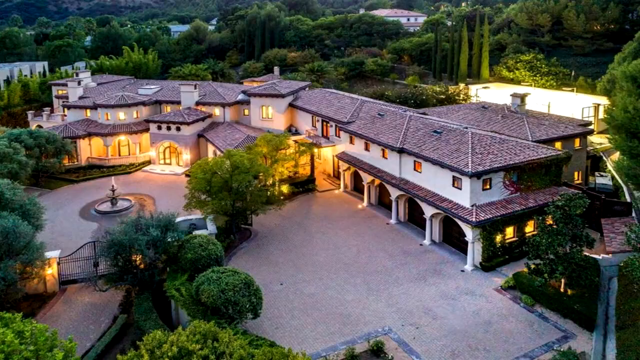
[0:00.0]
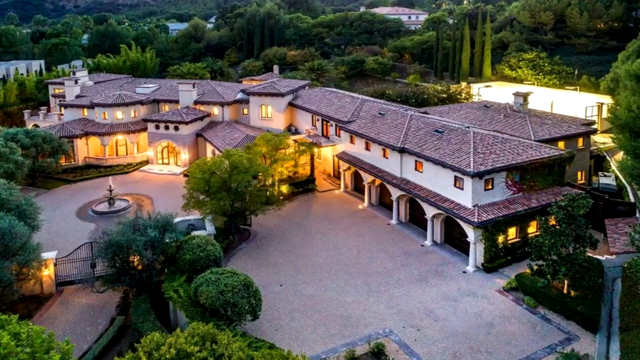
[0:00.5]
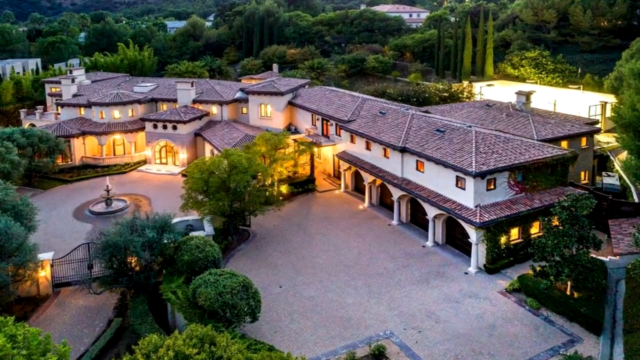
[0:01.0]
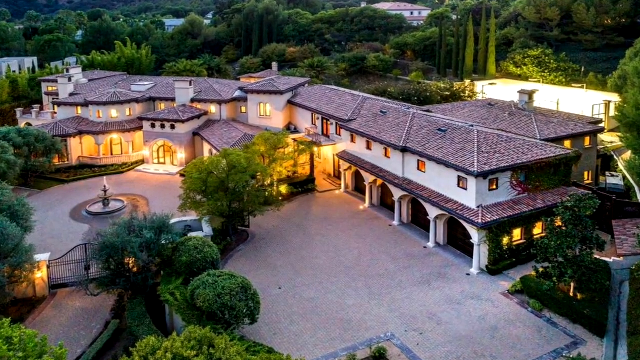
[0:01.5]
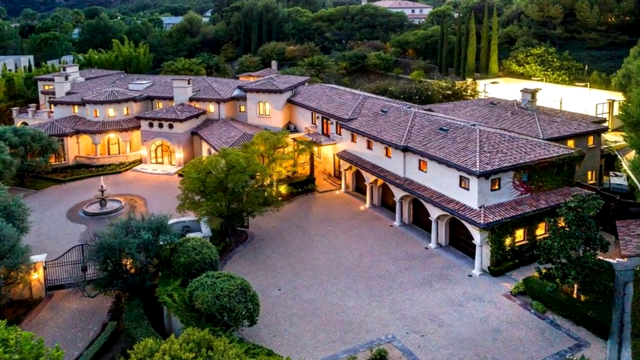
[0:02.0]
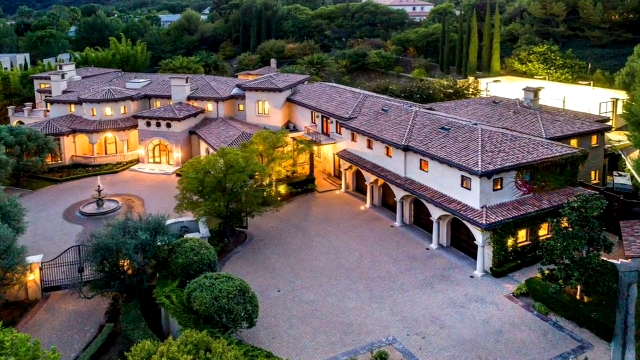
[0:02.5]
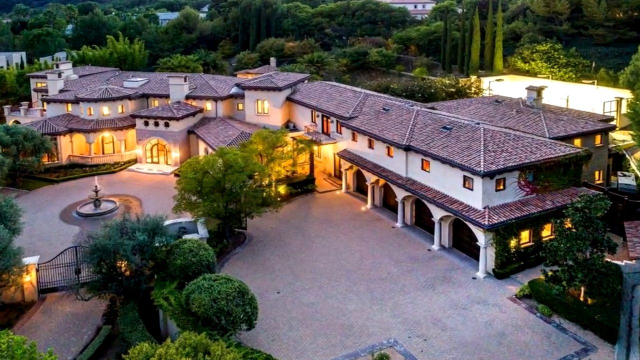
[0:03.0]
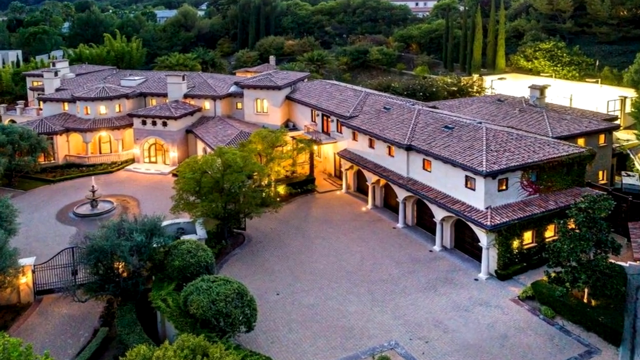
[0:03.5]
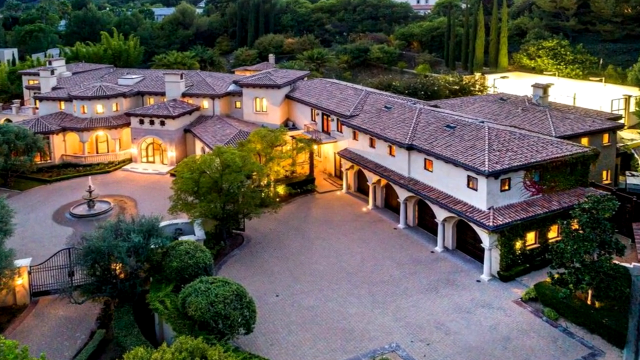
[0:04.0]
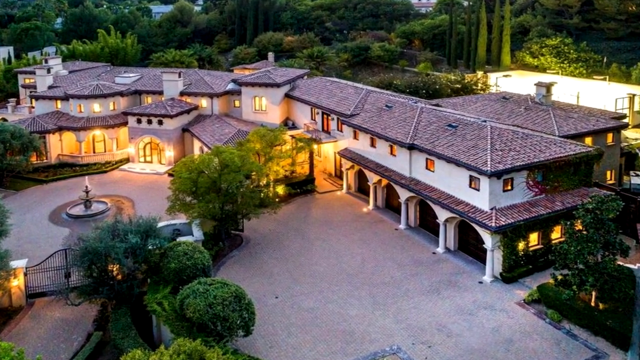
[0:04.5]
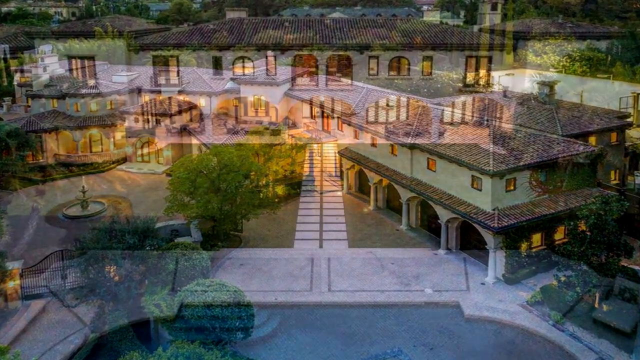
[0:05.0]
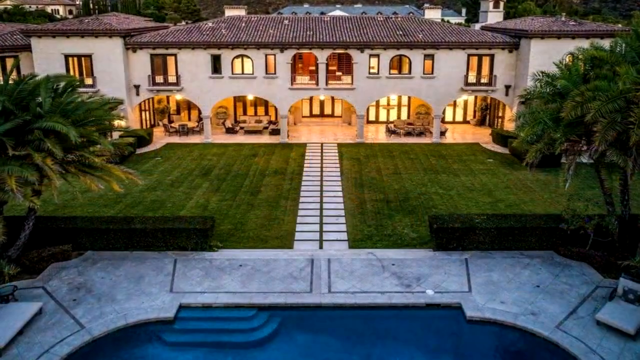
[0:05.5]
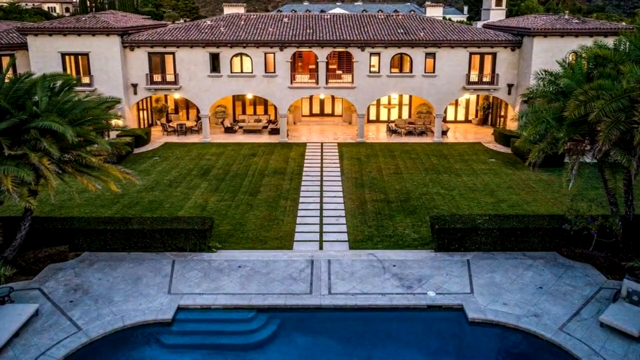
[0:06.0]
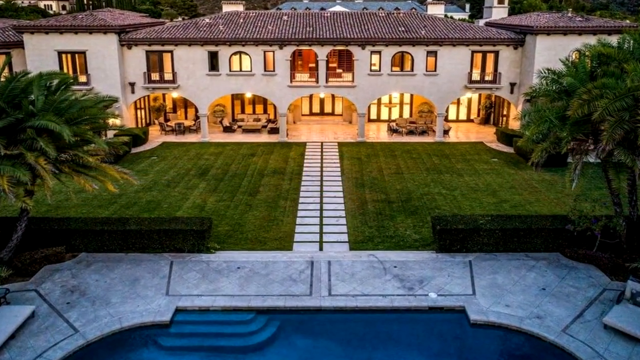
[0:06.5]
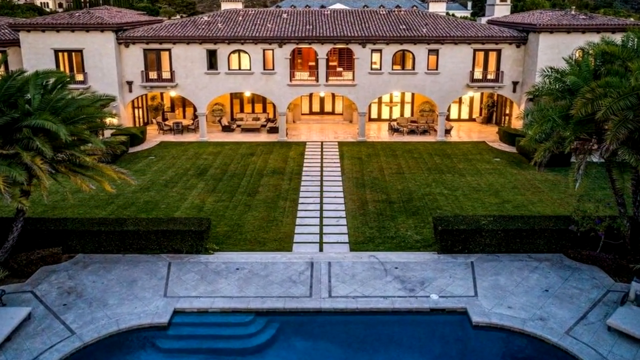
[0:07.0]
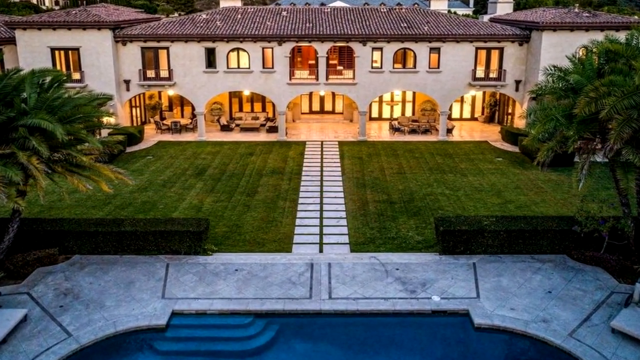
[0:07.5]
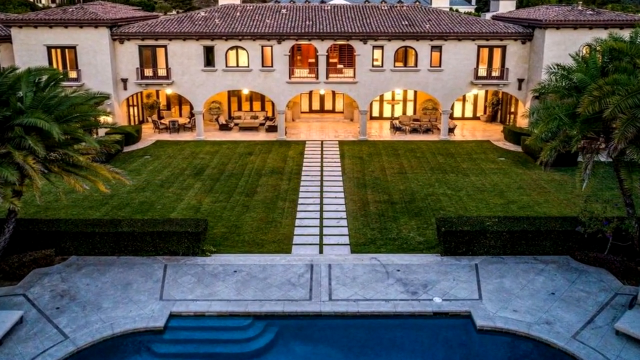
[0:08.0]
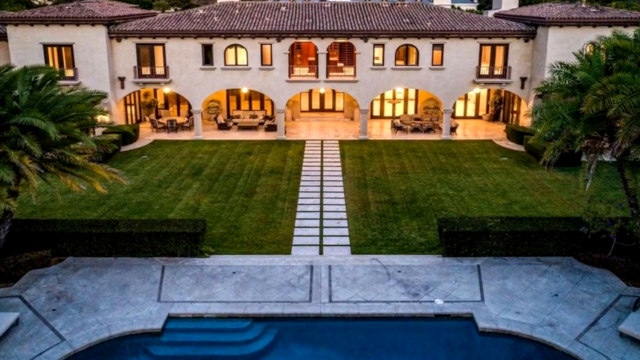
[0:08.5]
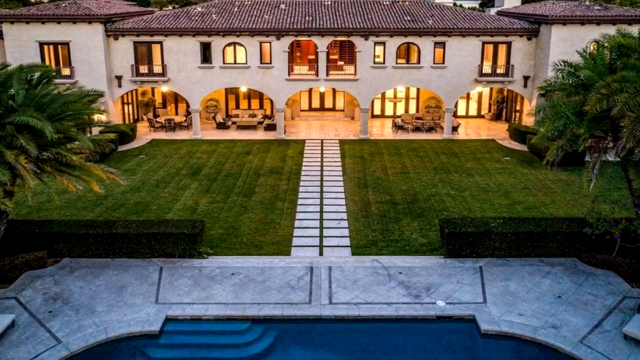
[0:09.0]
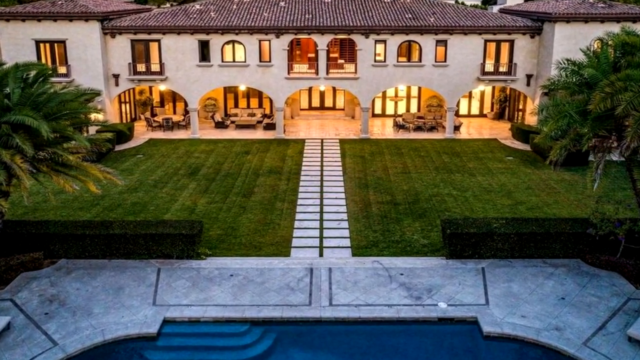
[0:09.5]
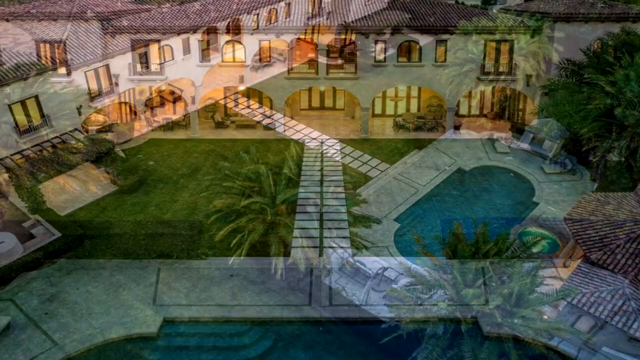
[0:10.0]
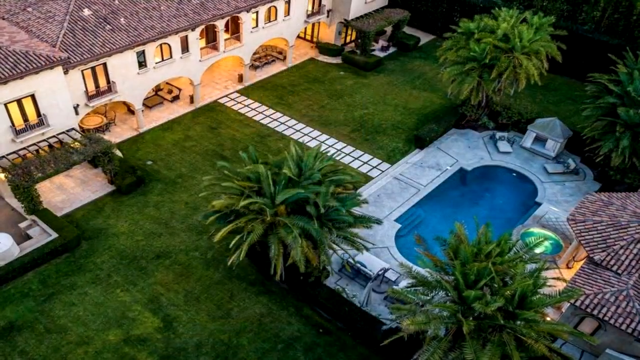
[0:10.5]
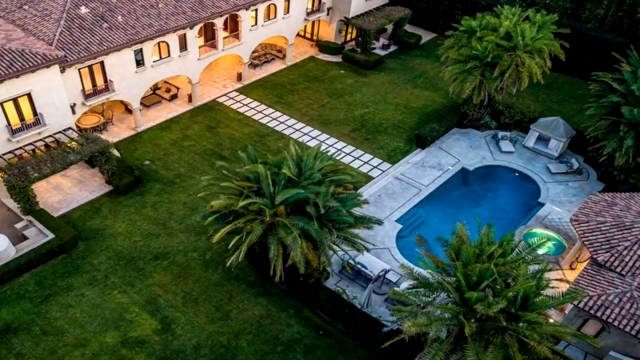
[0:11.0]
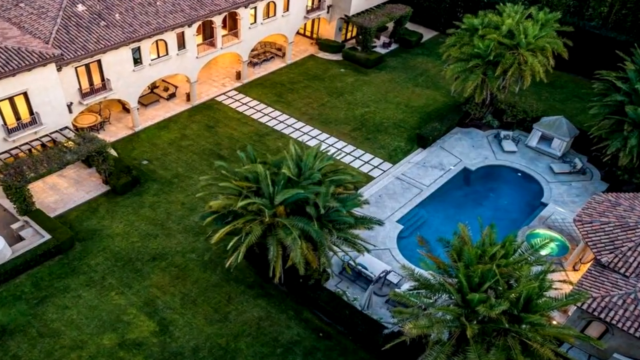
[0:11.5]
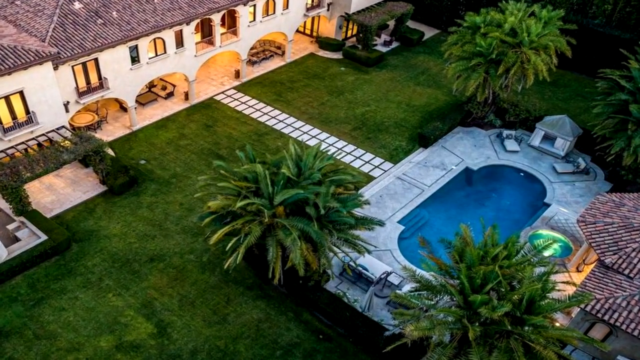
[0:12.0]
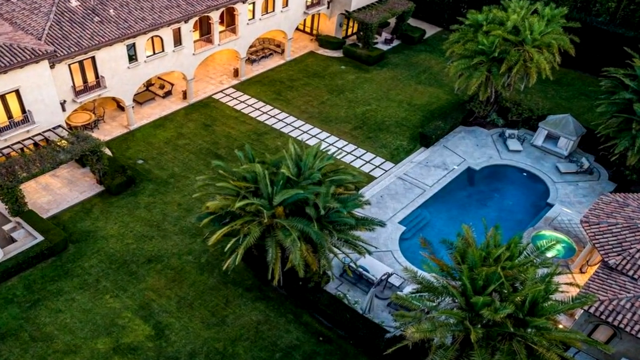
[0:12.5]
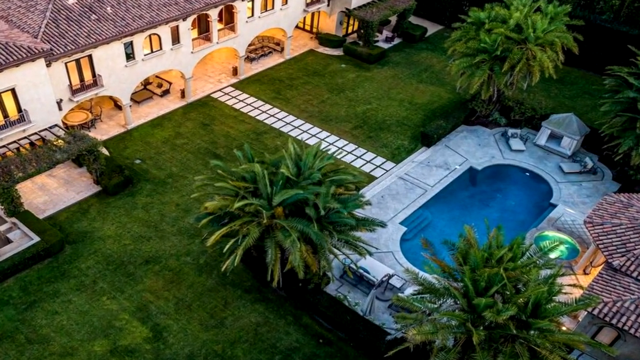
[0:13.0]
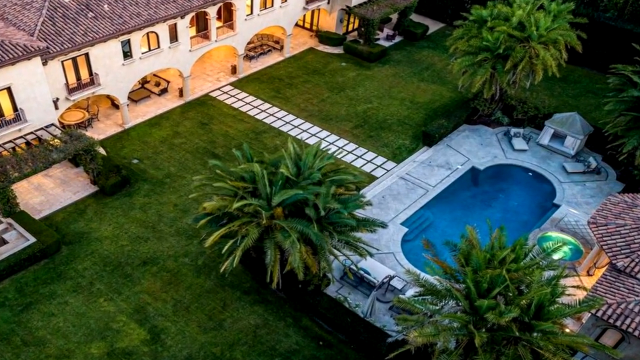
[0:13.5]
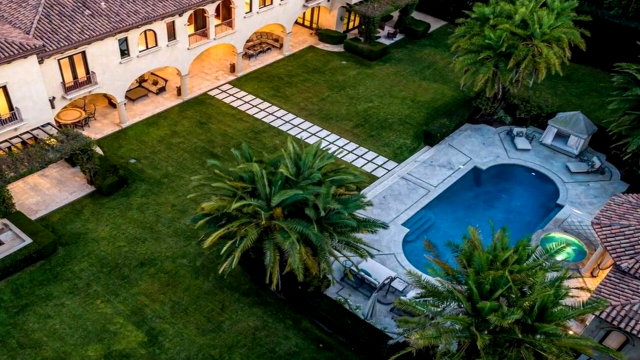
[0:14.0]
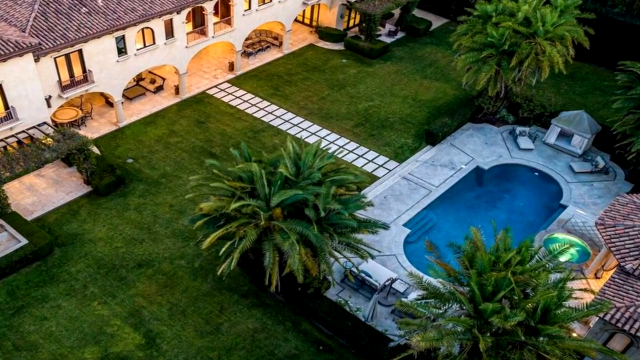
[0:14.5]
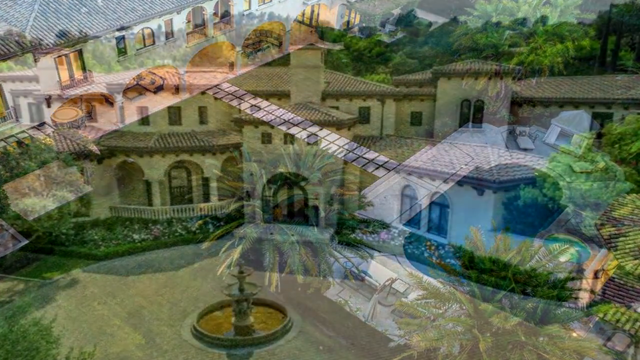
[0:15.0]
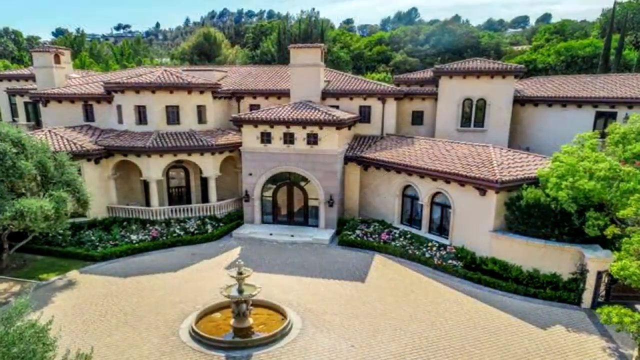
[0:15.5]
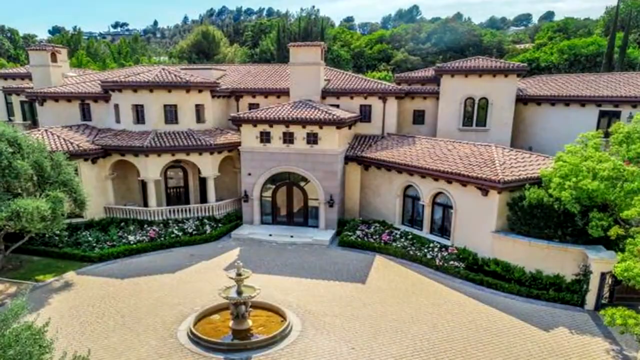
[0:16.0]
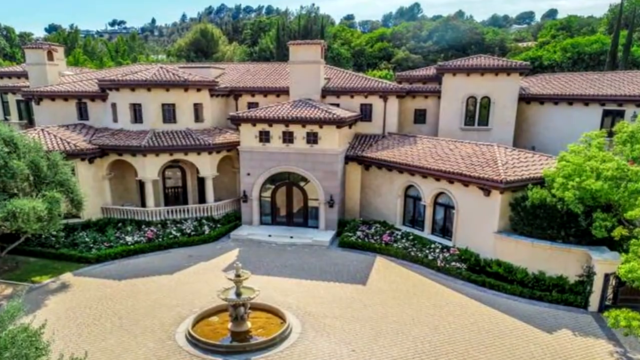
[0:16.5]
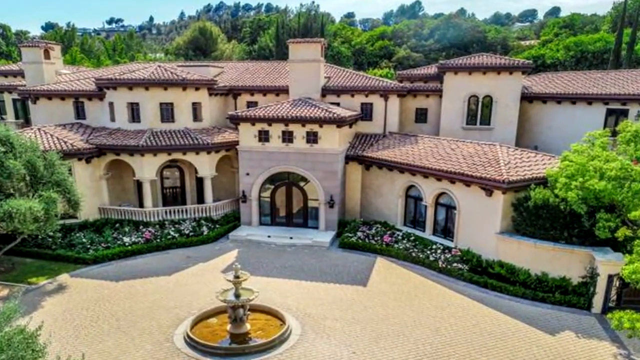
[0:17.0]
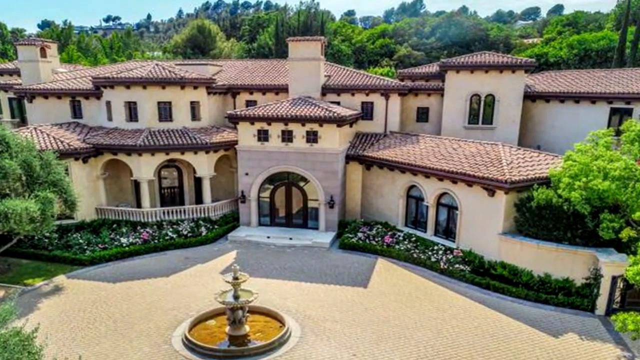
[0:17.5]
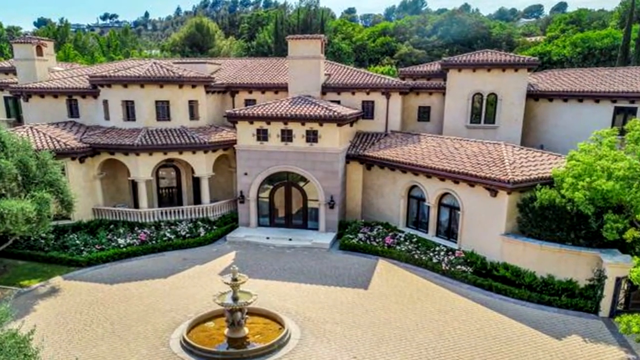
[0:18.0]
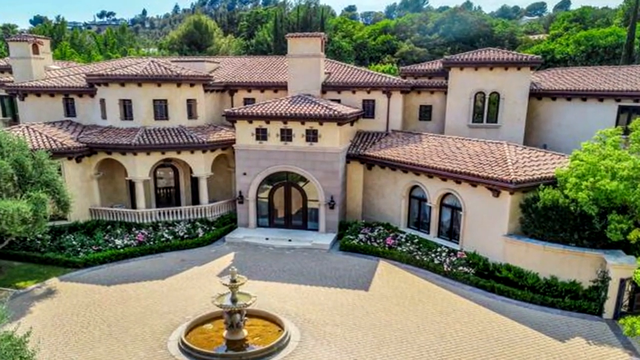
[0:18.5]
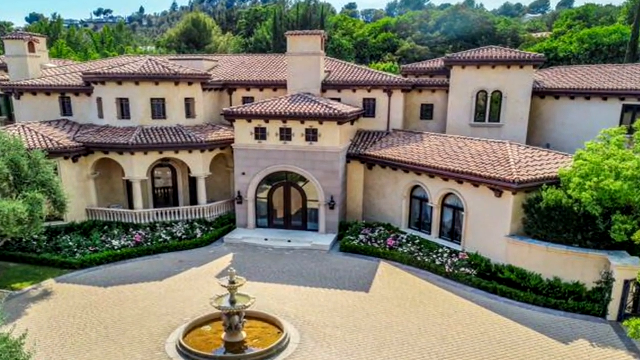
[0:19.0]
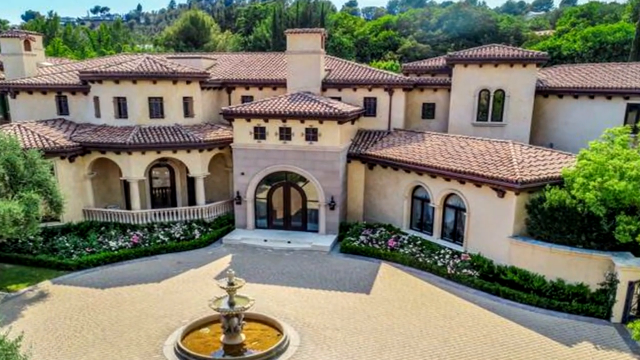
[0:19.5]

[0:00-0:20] Multiple pictures show a large mansion from multiple angles. It appears to be in the style of an Italian villa, with multi-colored shingles on the roof and two stories, and areas of arches on the first floor. First there is an aerial view of the front of the villa, then another aerial view from the back. From the back, the shingled roof is visible with white walls beneath it and multiple windows; at the bottom of these white walls are five arched openings. A stone pathway leads into the center of the center arch opening, with green grass on its left and right sides, and the pathway leads to a flat, stony structure that looks like a stone platform. A different shot reveals that this stone platform is actually the outside of a pool. The pool is surrounded by a gray, stony area, and about four palm trees surround it, seen in an aerial shot of the area. Another aerial shot shows the front of the villa: in the center of the concrete in front of the front door there is a circular fountain, and in the background multiple green trees rise above the shingled villa.